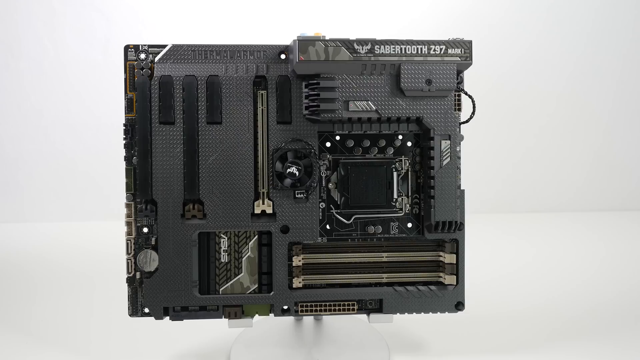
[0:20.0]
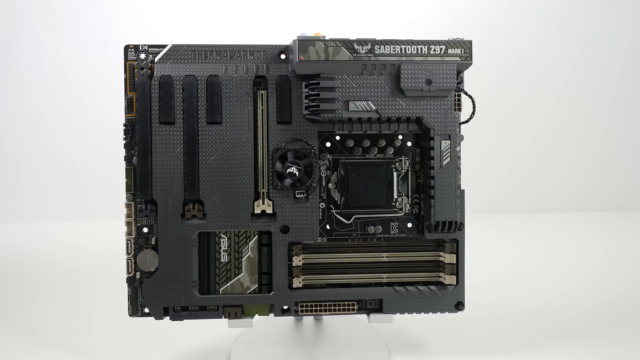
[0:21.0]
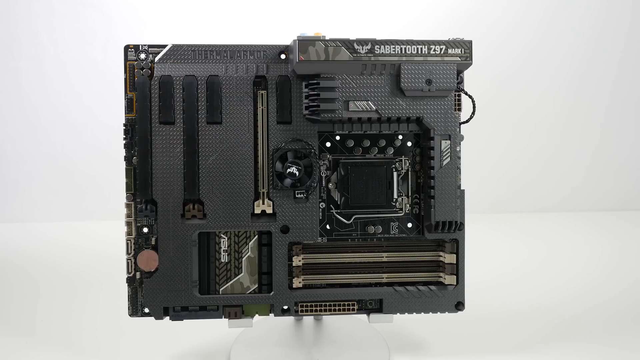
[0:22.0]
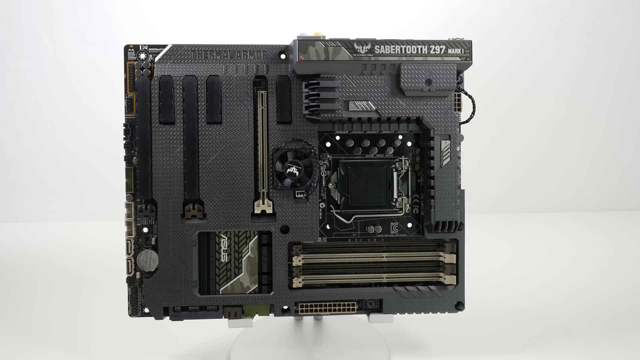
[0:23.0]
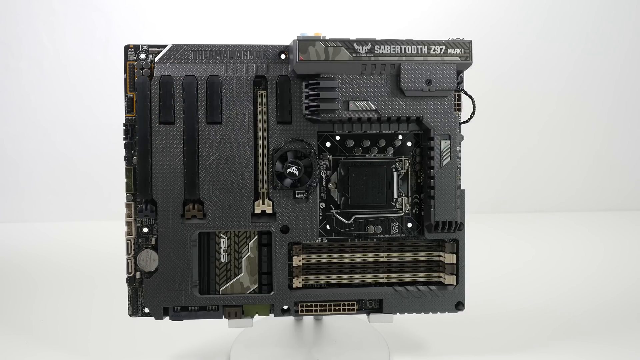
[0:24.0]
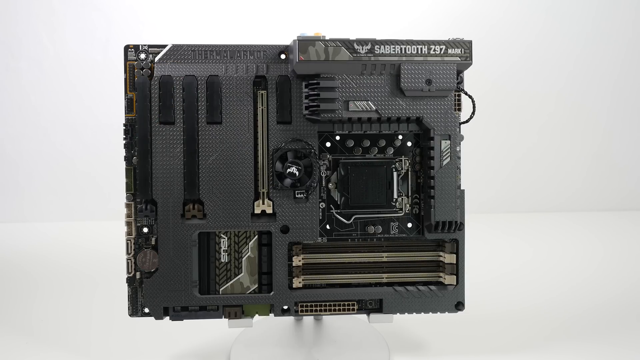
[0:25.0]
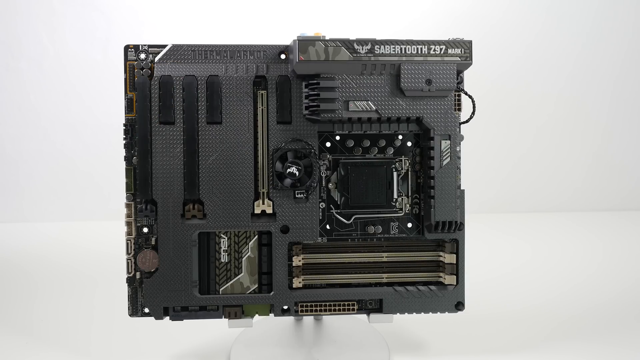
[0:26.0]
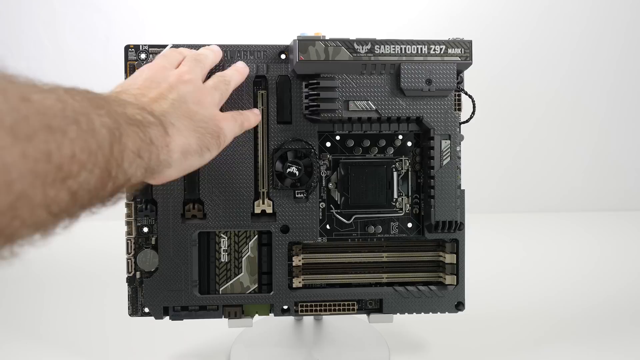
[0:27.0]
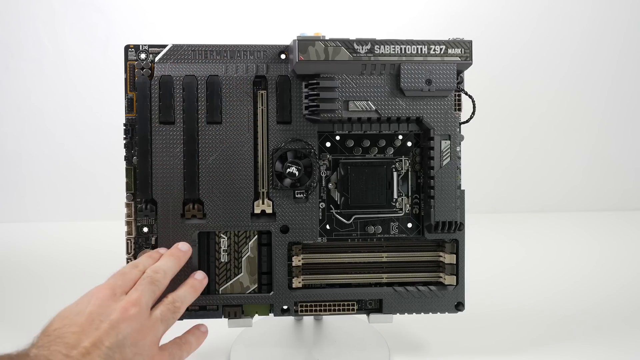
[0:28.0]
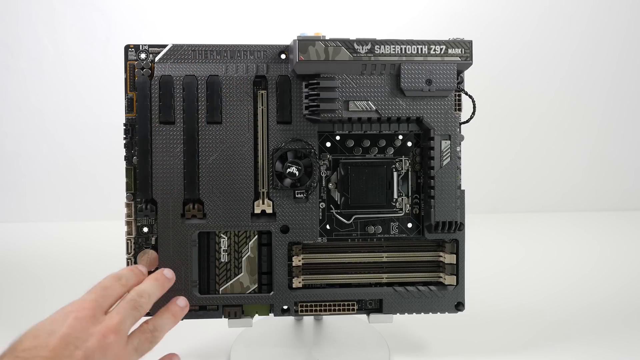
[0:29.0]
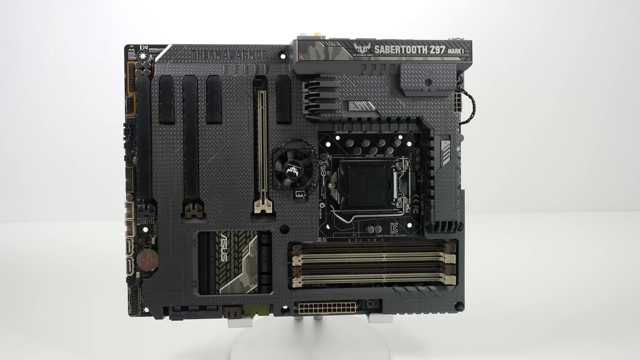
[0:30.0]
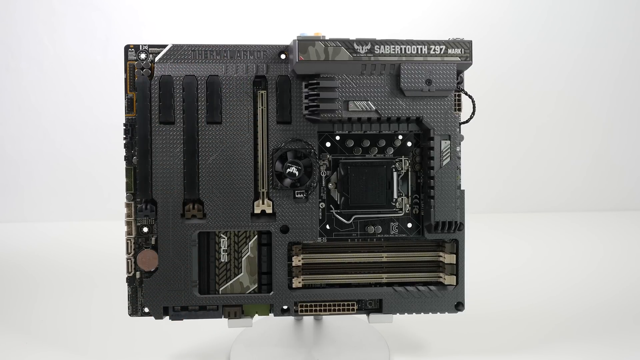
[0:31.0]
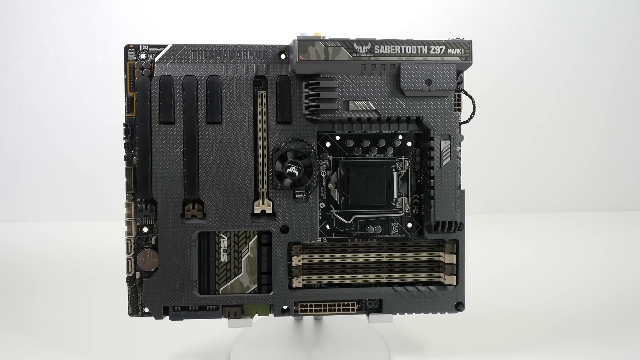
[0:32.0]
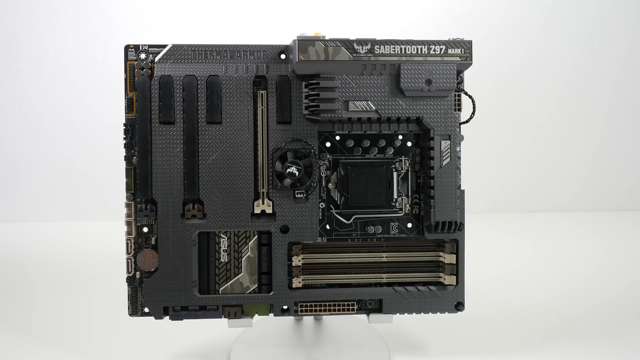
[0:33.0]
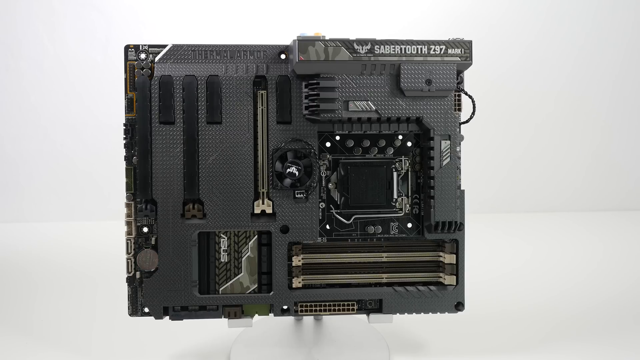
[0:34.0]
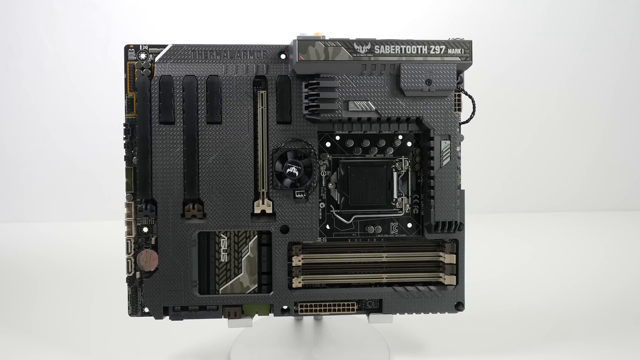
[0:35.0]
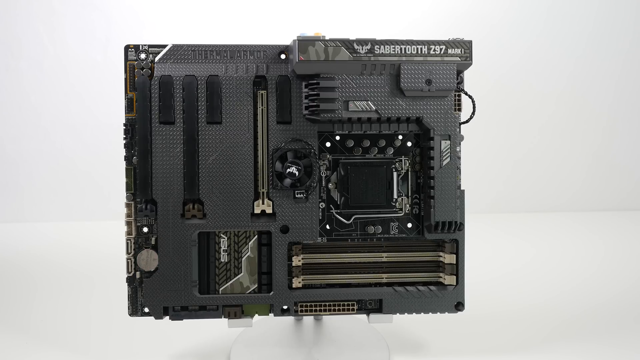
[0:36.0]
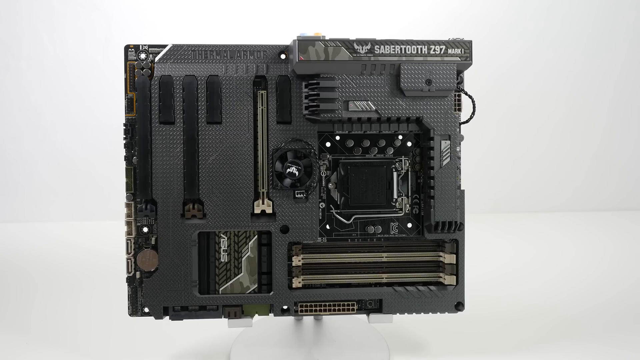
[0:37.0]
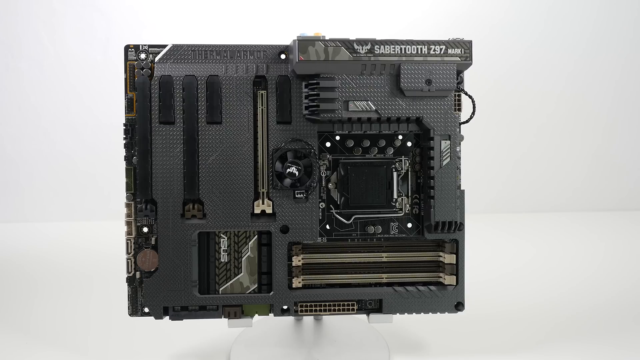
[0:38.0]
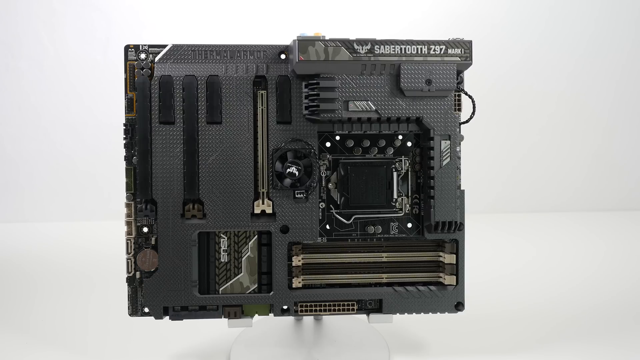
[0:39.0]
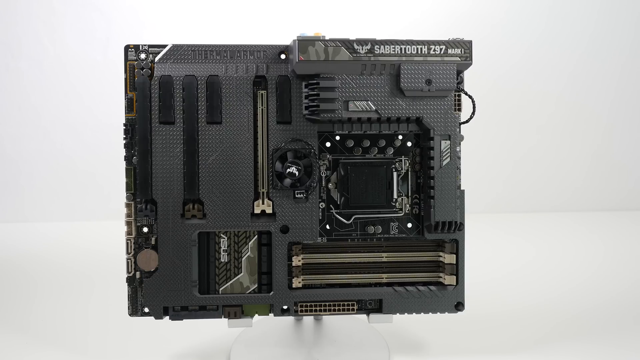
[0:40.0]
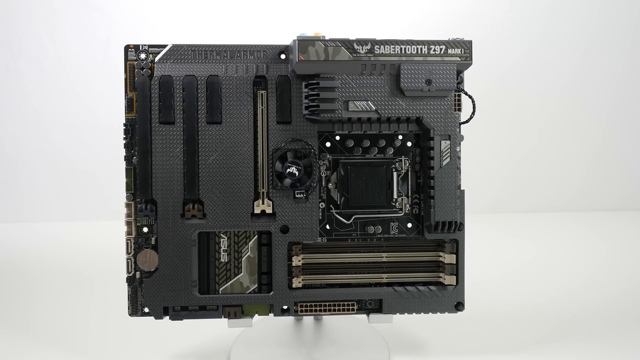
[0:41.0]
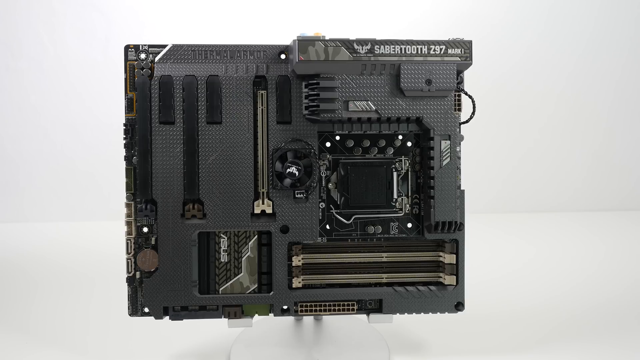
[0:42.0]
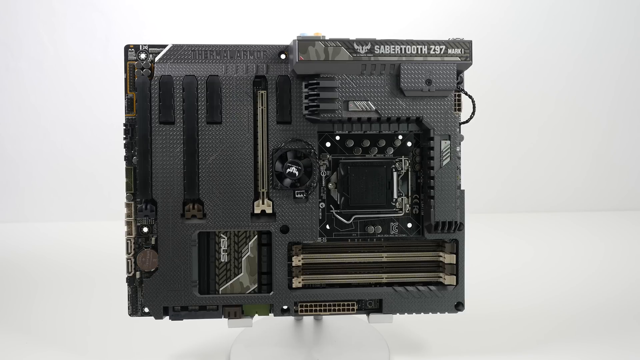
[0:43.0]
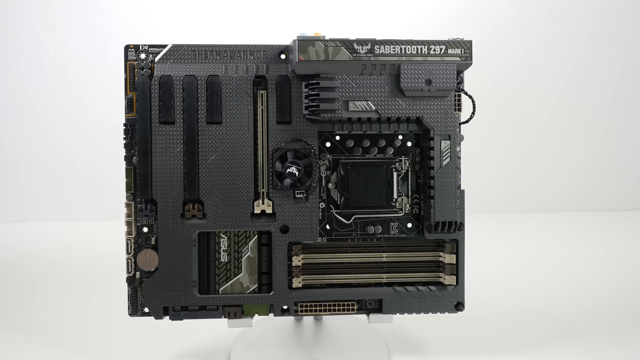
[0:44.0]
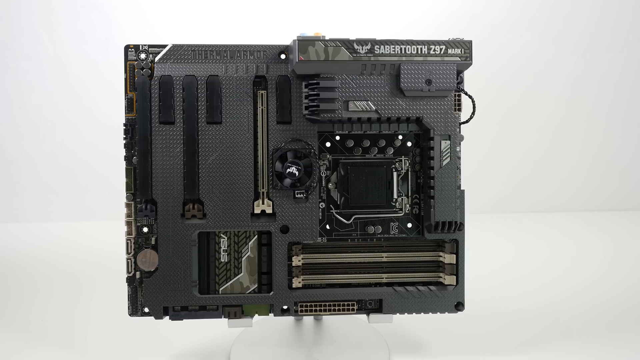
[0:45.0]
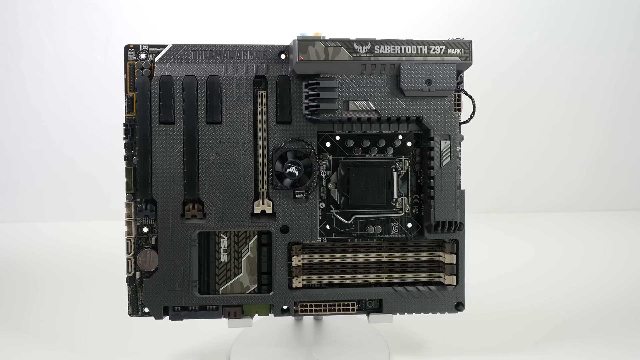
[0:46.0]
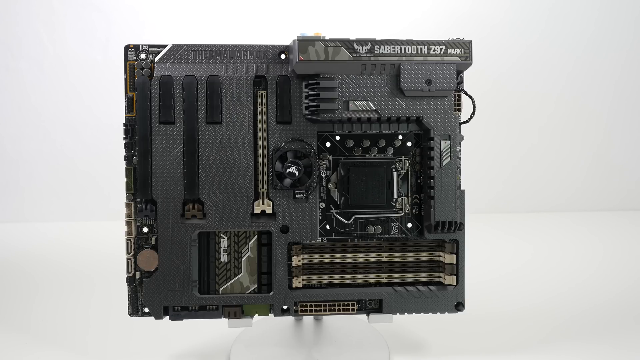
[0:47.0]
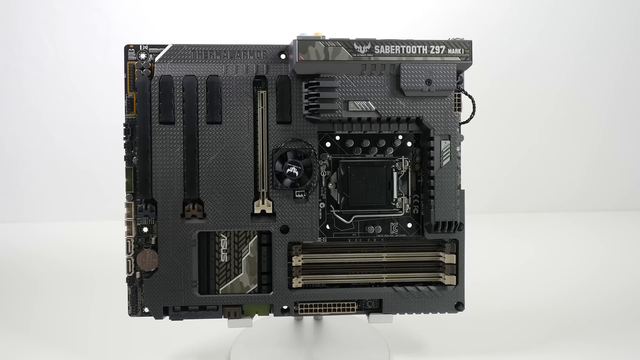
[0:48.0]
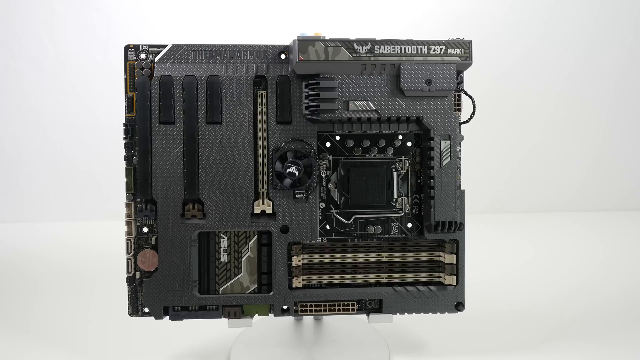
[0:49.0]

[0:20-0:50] The video moves to the unboxed motherboard, which reads "Sabertooth Z97 Mark I" in its top right-hand corner; the ASUS logo is present throughout, and the board has an overall black, futuristic design. It is set against a plain white background. The person's right arm, white with a slight red tint and a very hairy forearm, gestures toward the top left-hand side of the motherboard, and the fingers intermittently appear in the bottom left-hand corner of the screen. The person seems to be showcasing different features of the motherboard. A silver circular part near the bottom left-hand corner reflects light and catches glimpses of the skin colour as the hand moves. The motherboard is mainly black with hints of green, along with silver and grey parts.